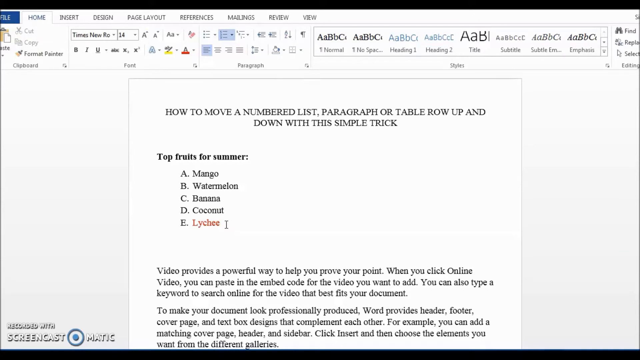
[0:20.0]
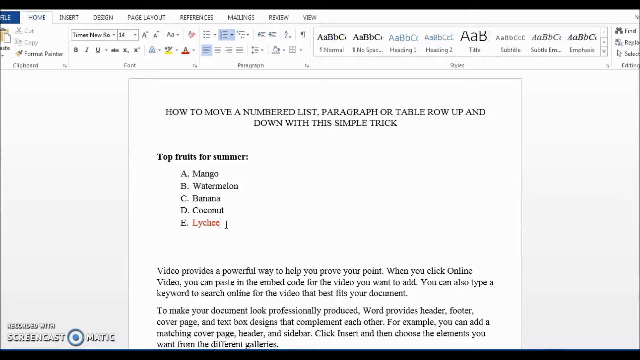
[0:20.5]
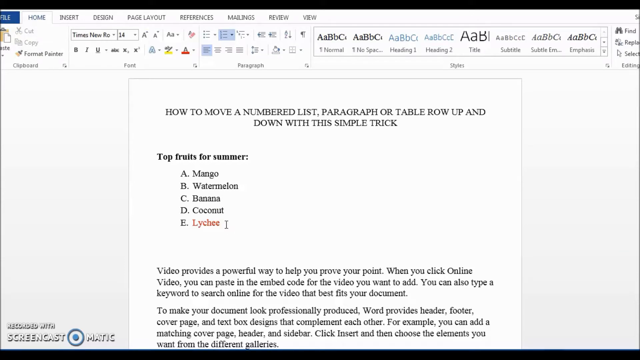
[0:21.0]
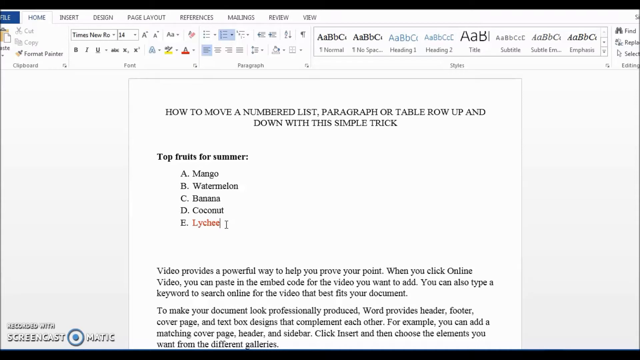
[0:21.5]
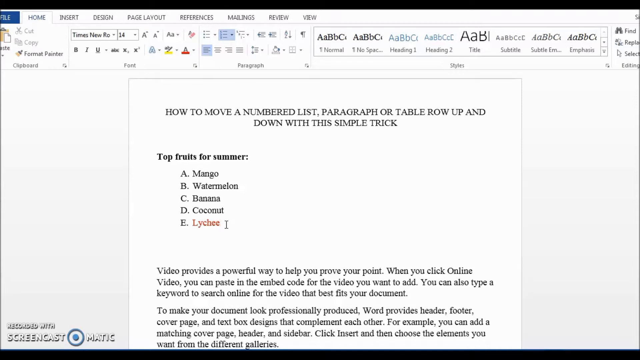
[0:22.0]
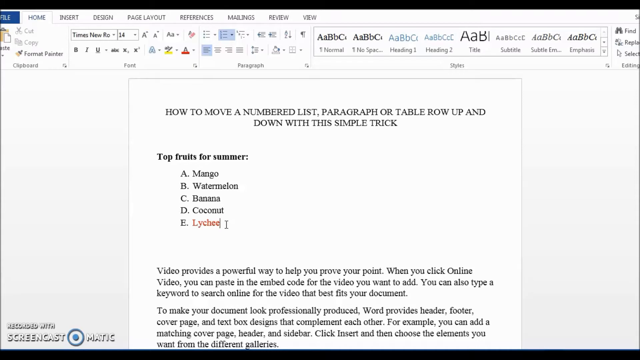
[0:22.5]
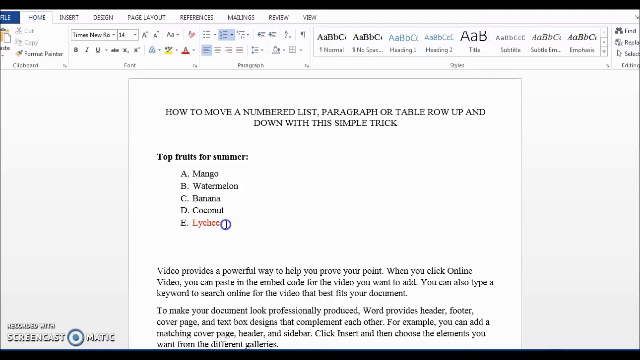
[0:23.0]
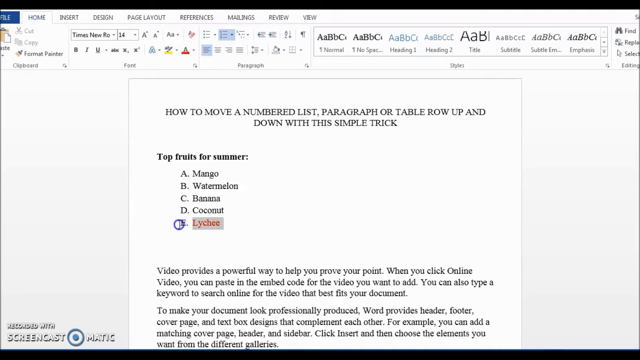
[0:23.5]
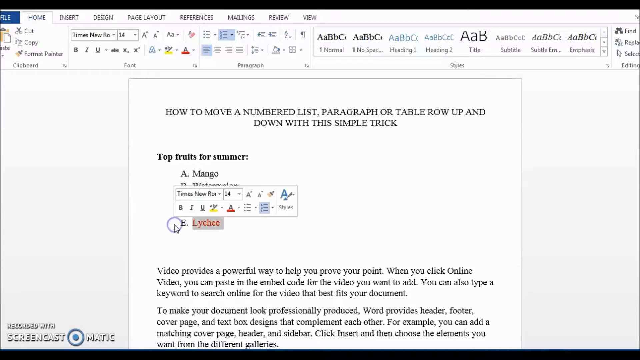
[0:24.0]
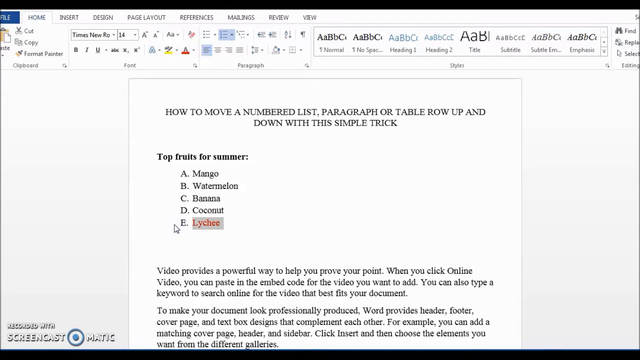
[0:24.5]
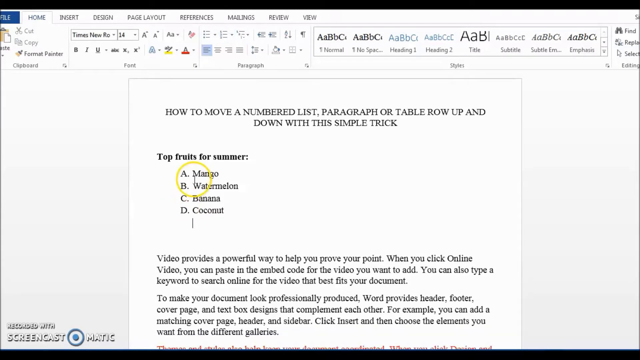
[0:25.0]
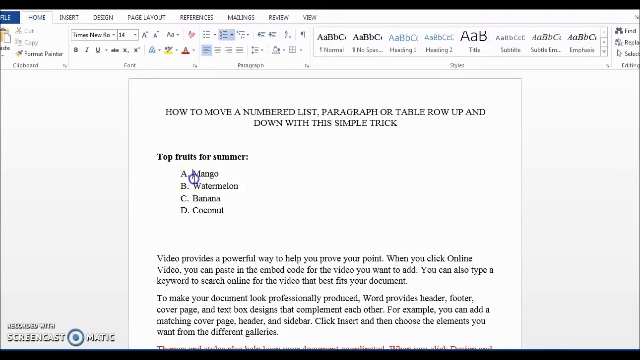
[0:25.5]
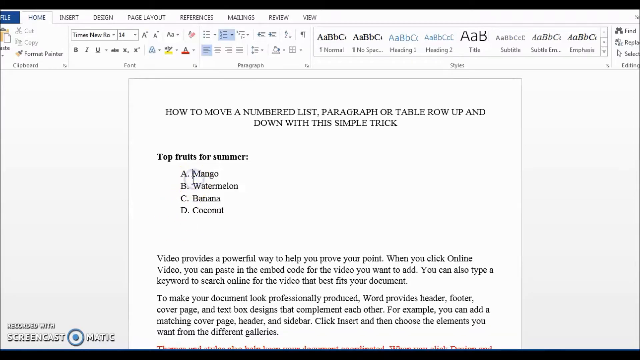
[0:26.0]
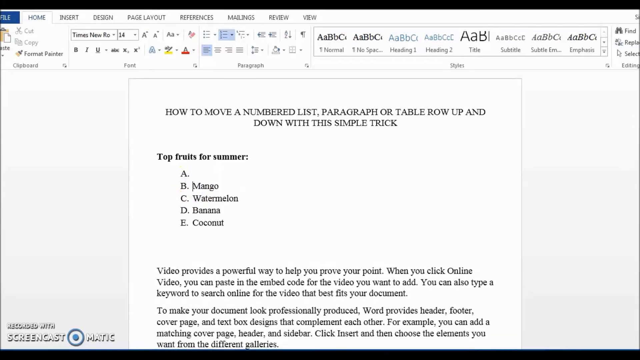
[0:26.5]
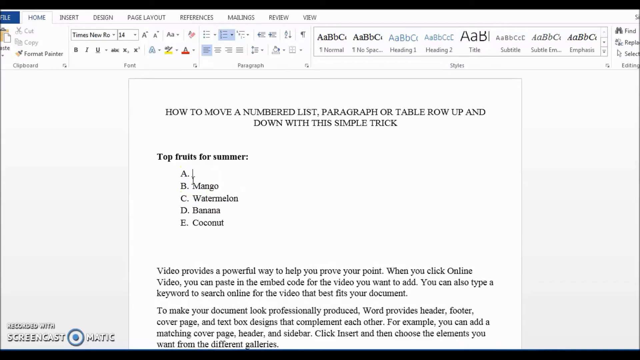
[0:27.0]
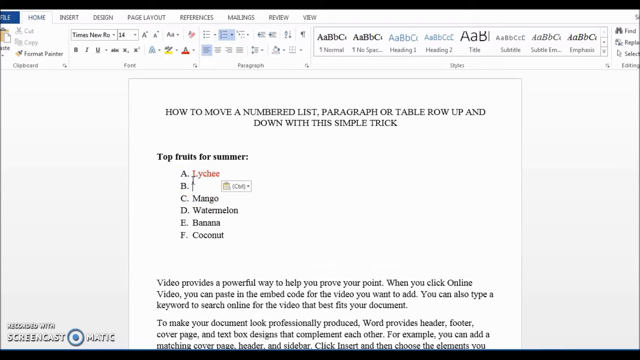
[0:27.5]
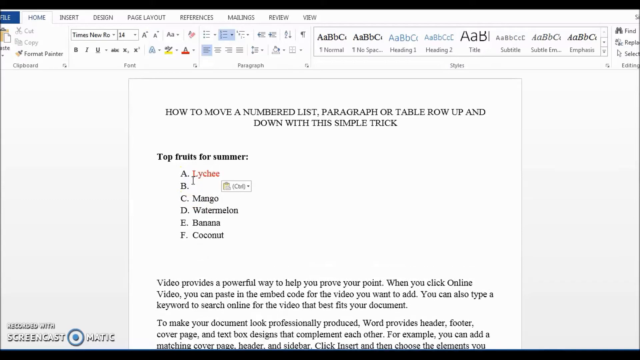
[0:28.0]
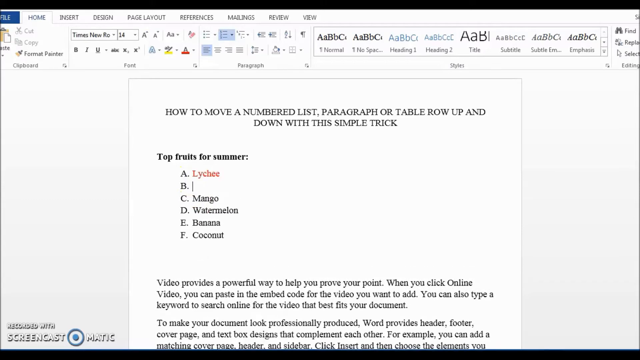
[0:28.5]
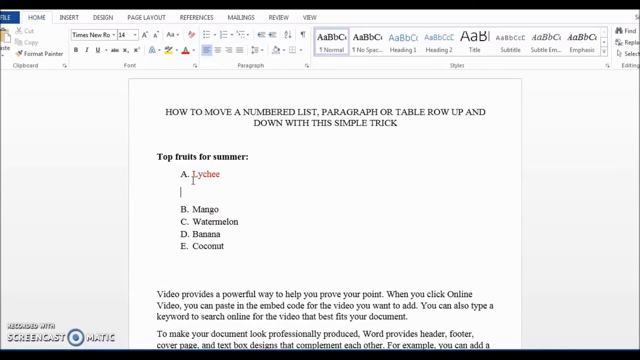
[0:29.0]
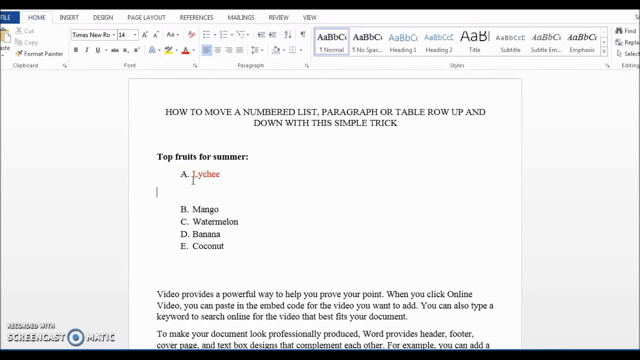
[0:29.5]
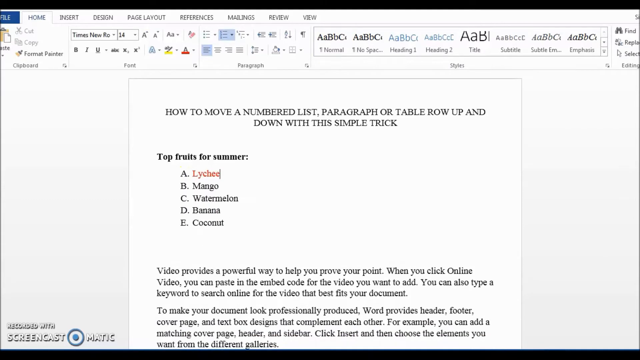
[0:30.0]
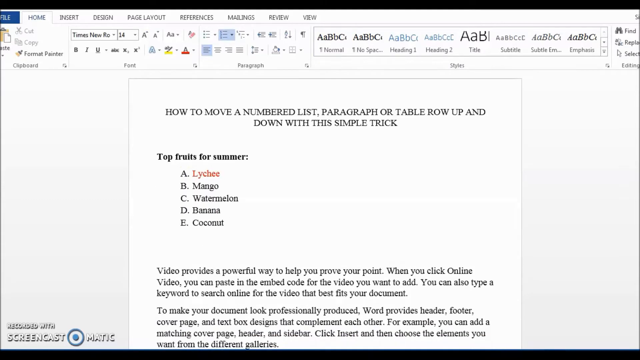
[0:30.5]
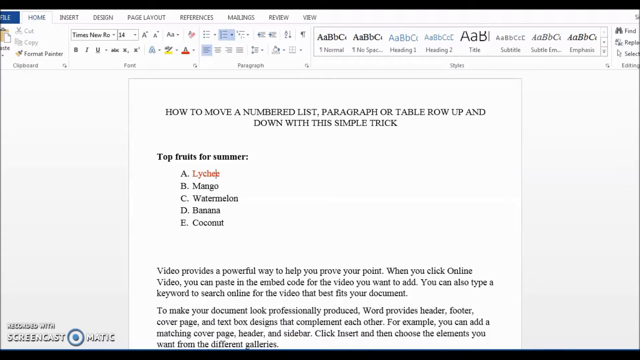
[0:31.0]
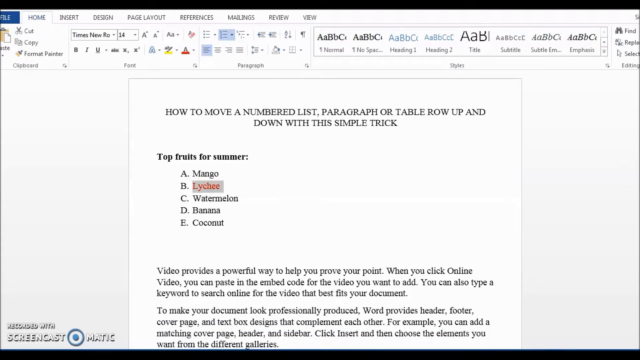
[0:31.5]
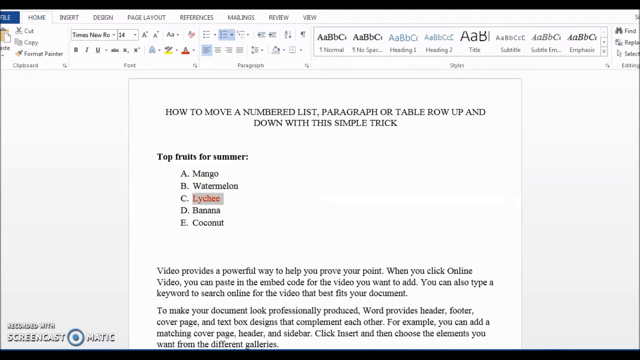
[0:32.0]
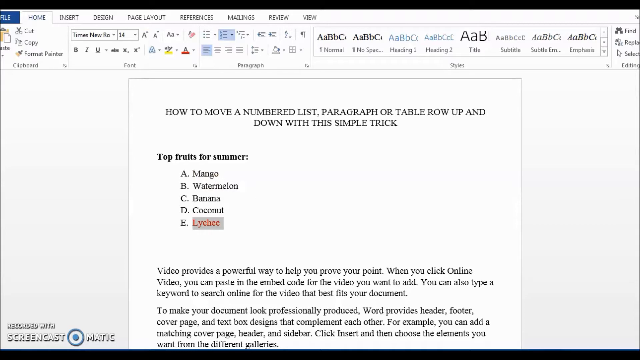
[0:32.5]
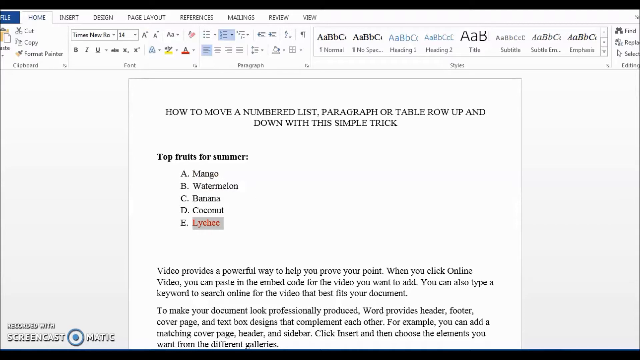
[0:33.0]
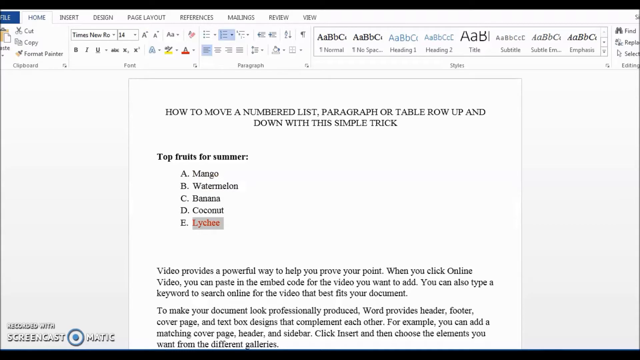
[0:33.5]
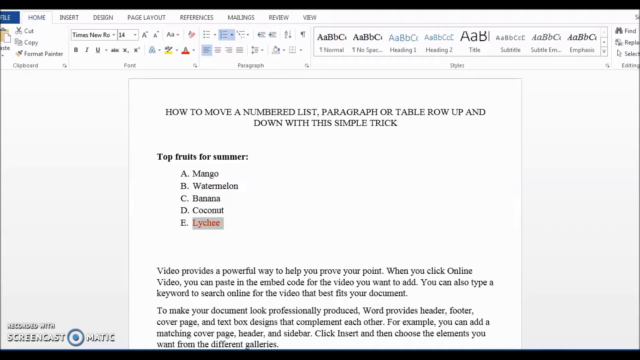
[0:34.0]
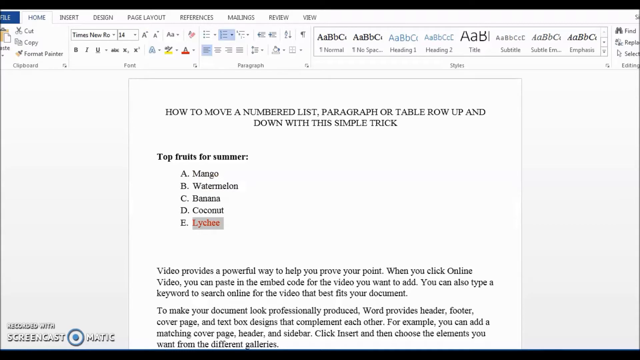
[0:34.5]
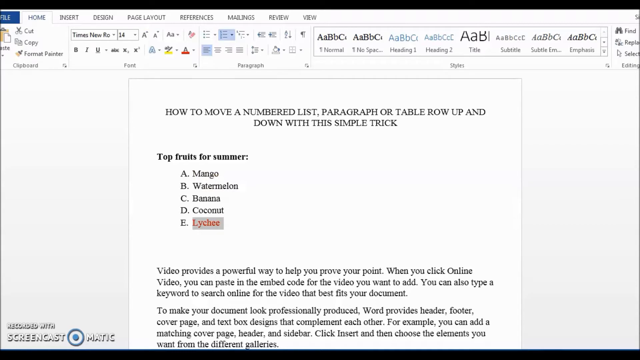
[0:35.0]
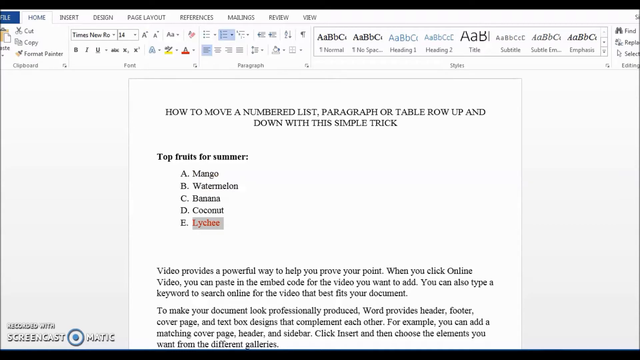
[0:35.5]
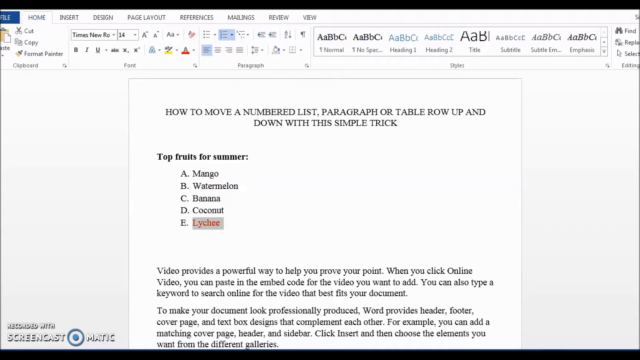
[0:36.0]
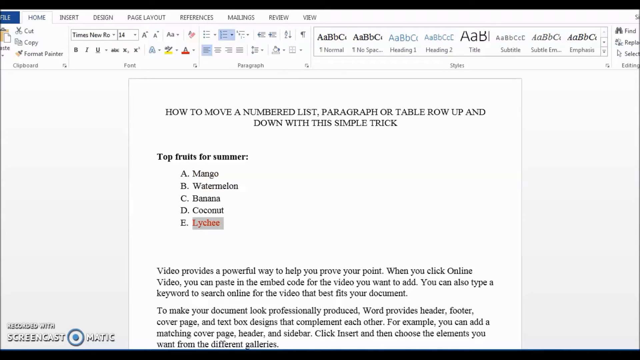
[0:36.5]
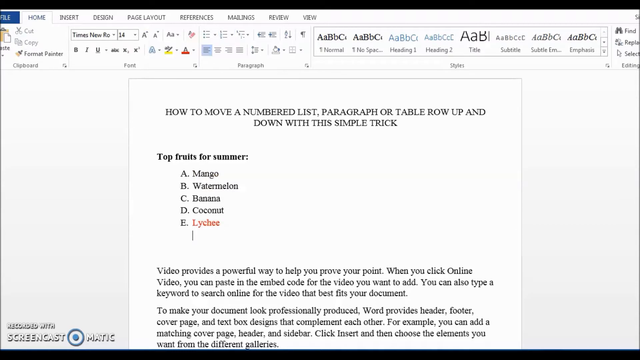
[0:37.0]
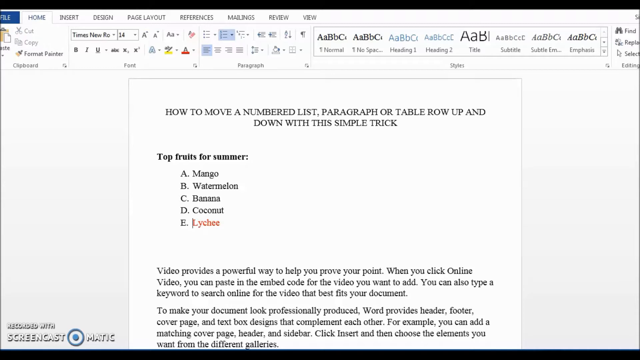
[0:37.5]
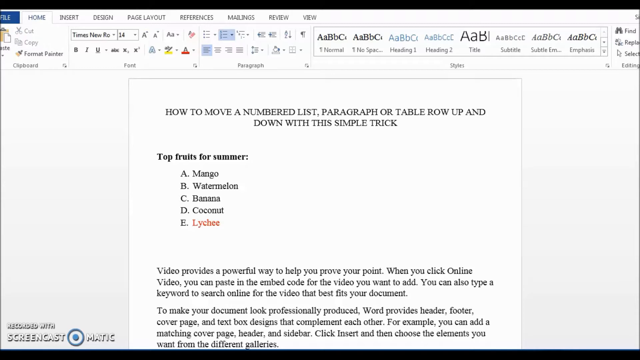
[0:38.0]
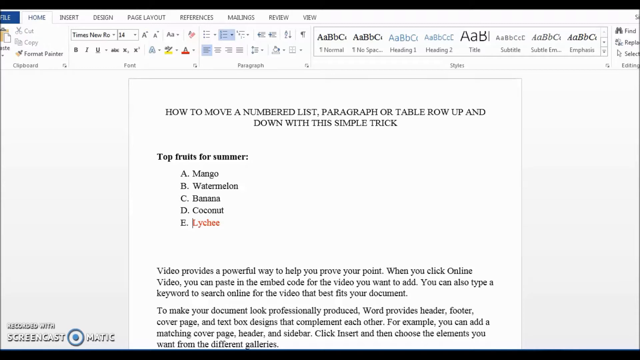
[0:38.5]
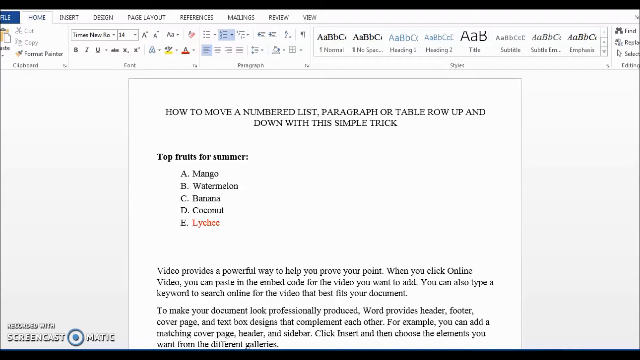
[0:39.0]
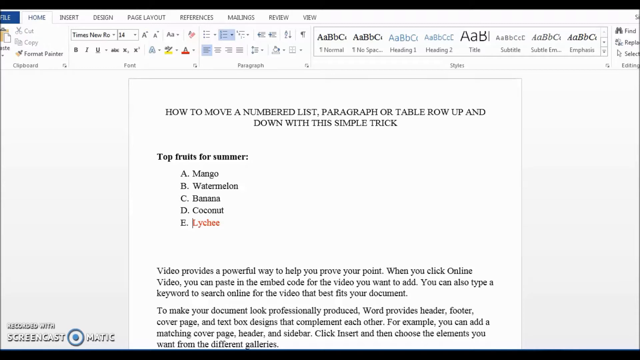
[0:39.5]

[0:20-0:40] Someone is showing how to edit something in a Word document, shown in close-up. The document appears to be named "Top fruits for summer." The idea so far is apparently to copy and paste or cut and paste. The list reads mango, watermelon, banana, coconut, and one more item.